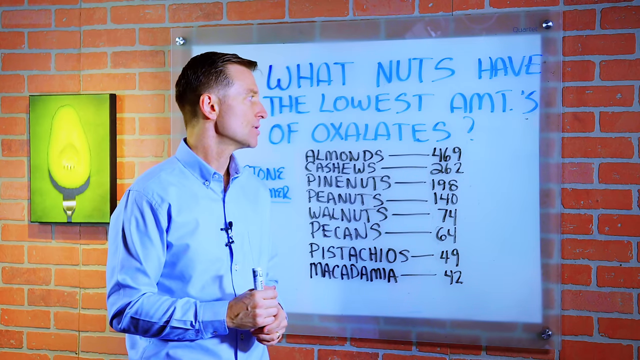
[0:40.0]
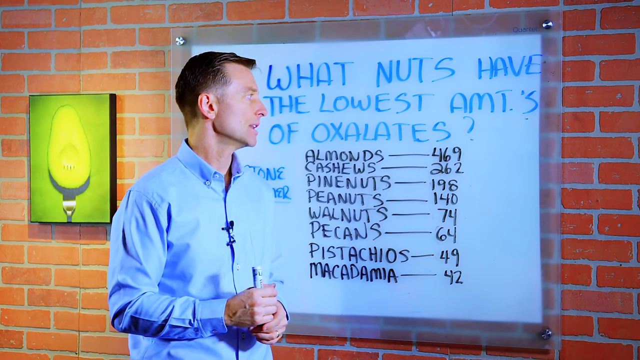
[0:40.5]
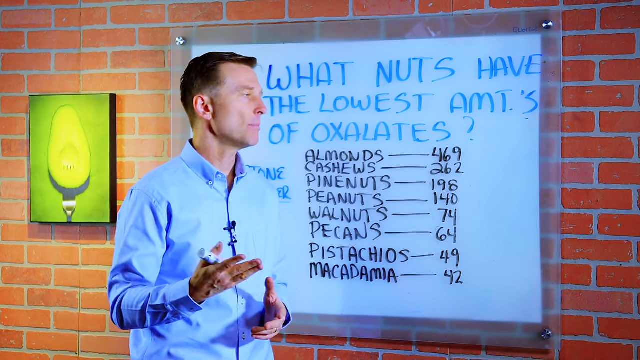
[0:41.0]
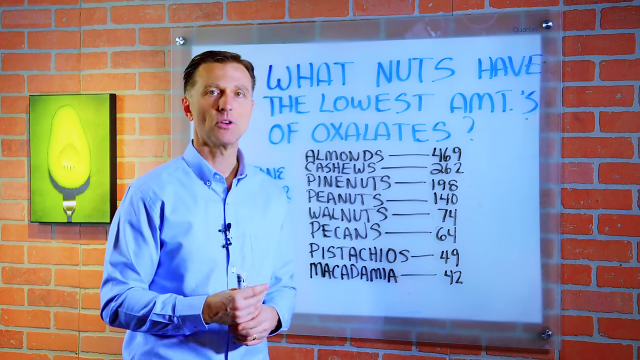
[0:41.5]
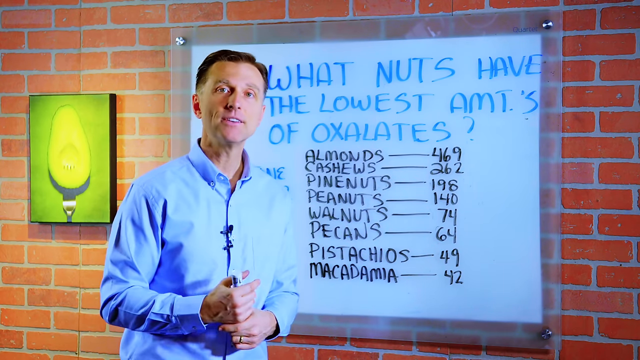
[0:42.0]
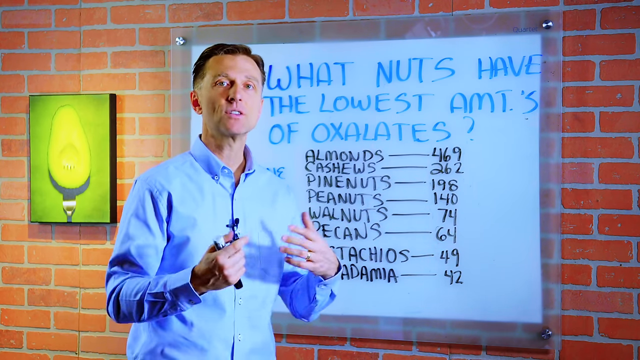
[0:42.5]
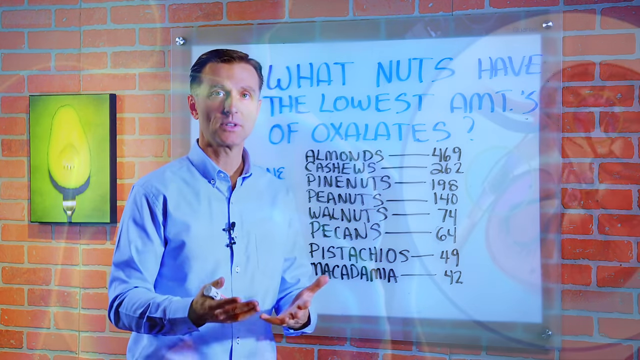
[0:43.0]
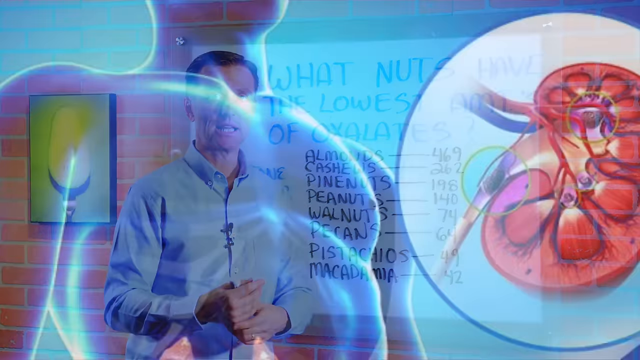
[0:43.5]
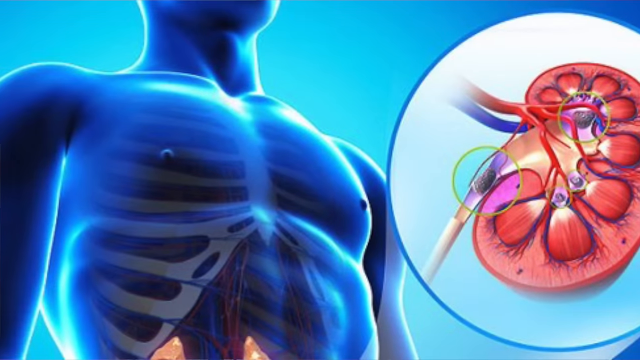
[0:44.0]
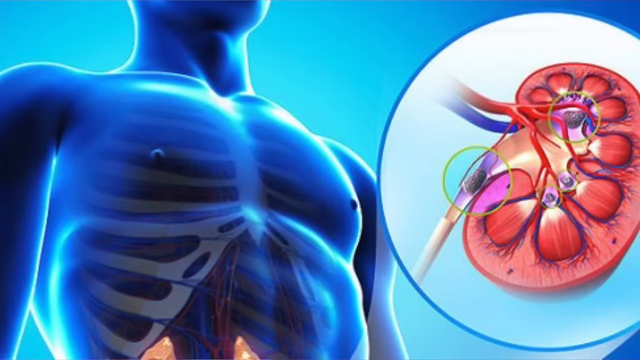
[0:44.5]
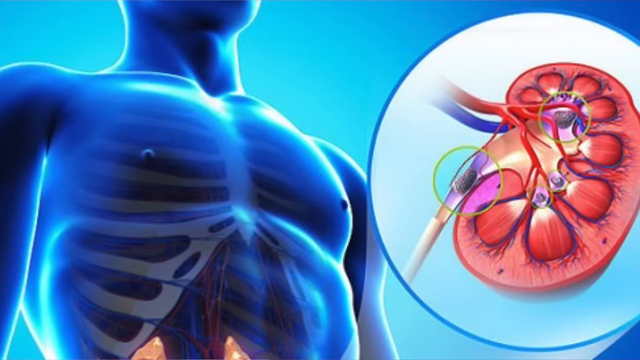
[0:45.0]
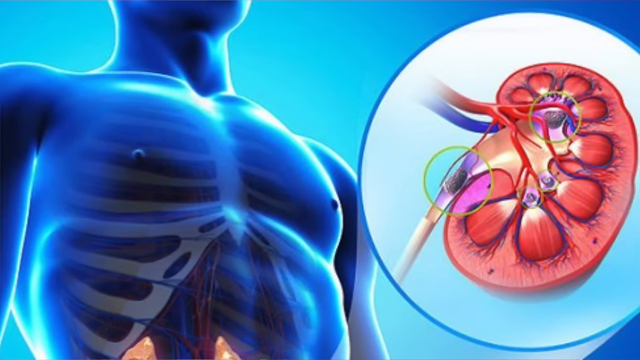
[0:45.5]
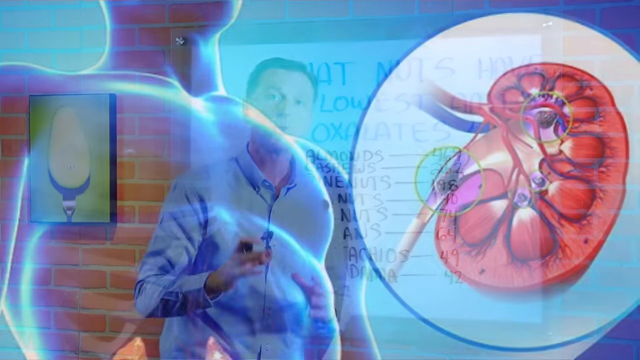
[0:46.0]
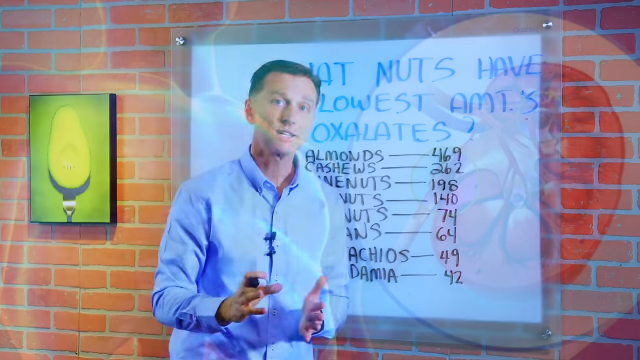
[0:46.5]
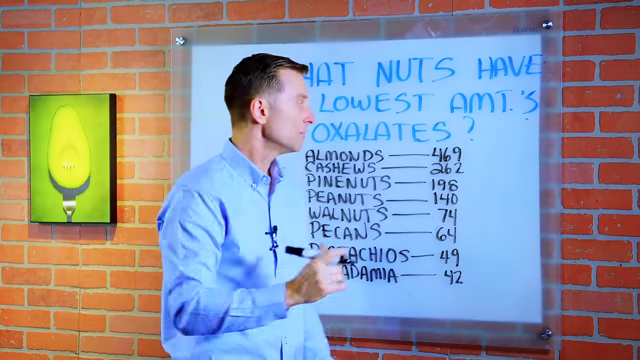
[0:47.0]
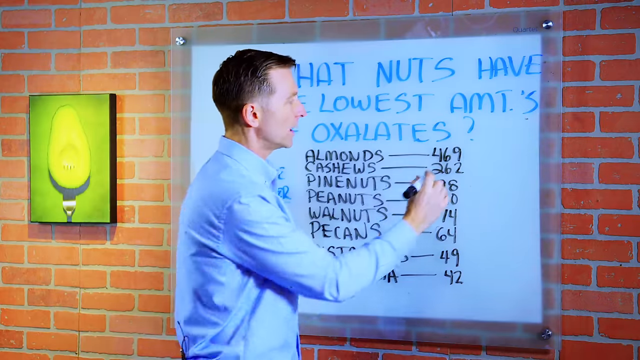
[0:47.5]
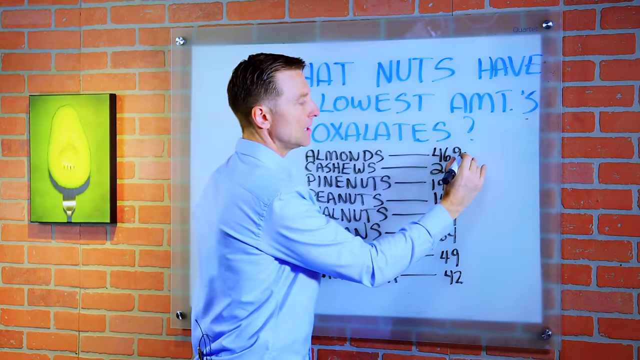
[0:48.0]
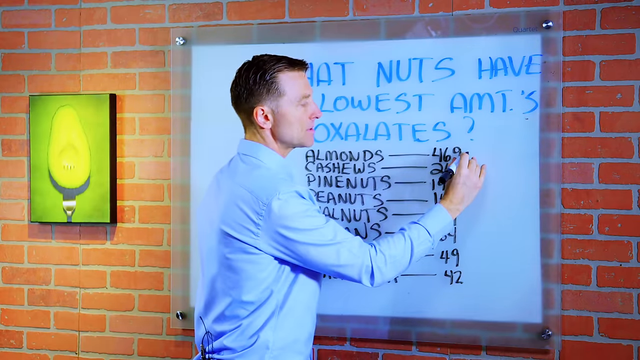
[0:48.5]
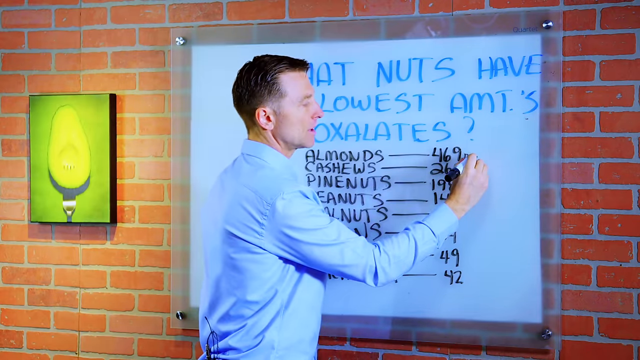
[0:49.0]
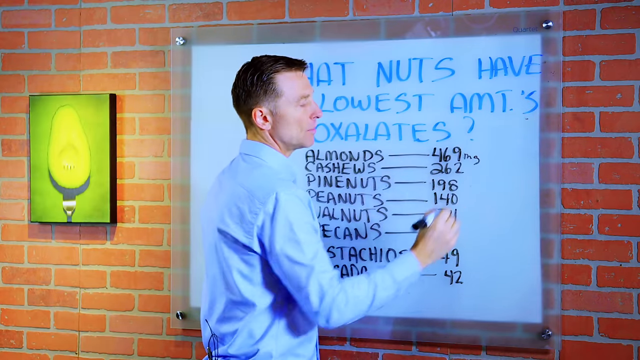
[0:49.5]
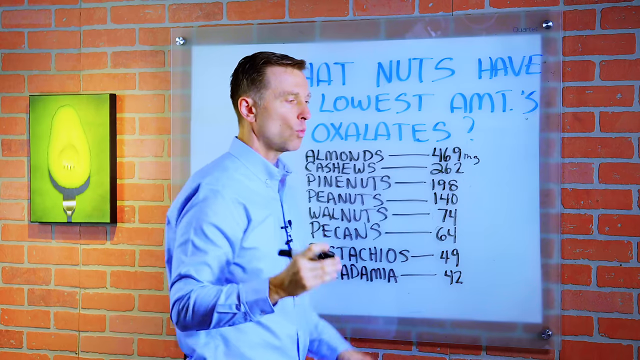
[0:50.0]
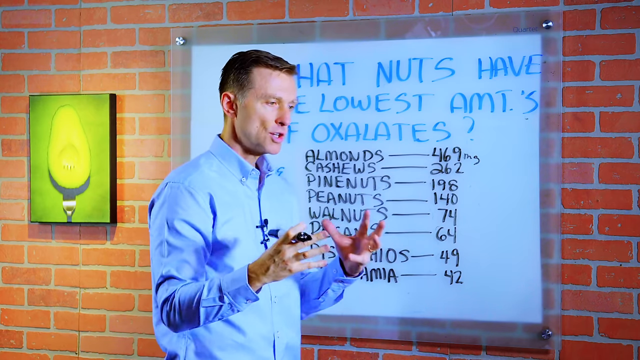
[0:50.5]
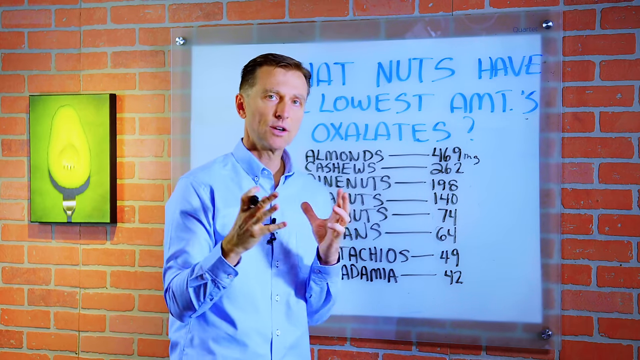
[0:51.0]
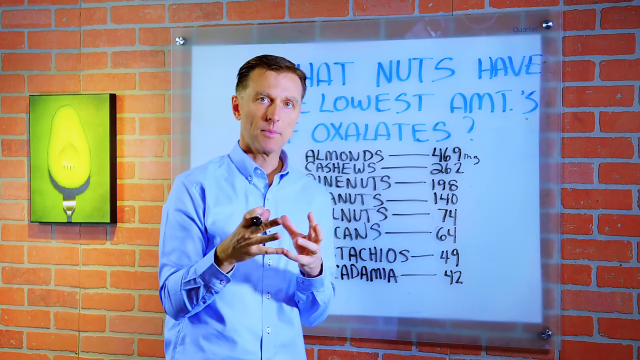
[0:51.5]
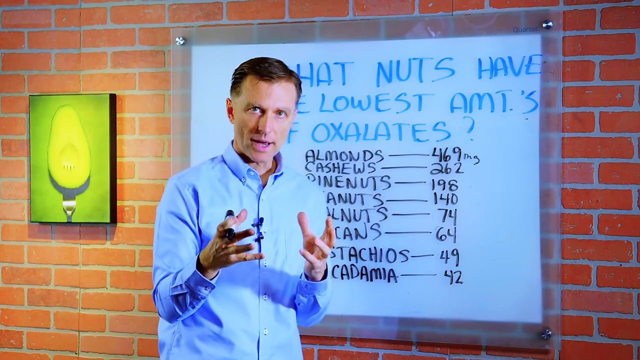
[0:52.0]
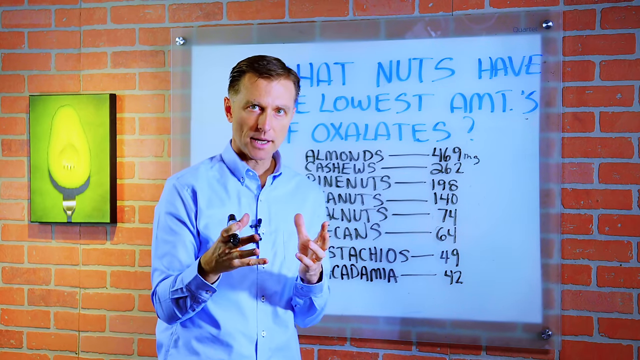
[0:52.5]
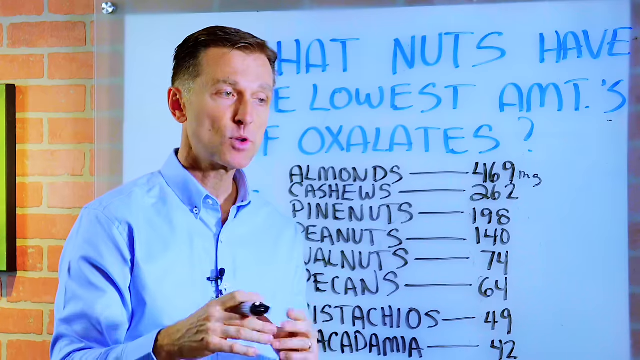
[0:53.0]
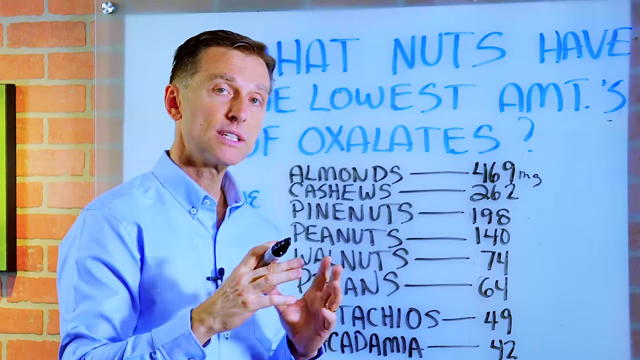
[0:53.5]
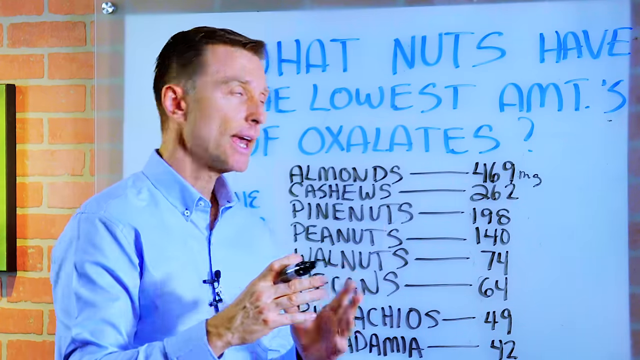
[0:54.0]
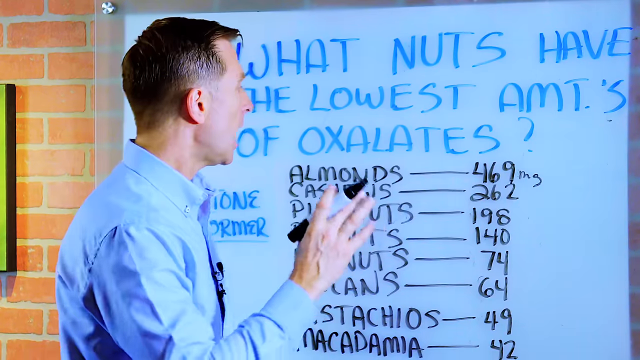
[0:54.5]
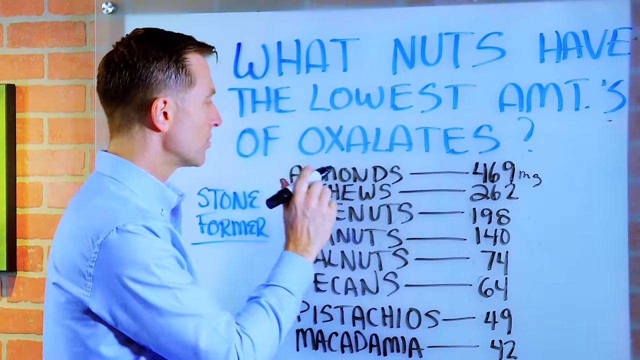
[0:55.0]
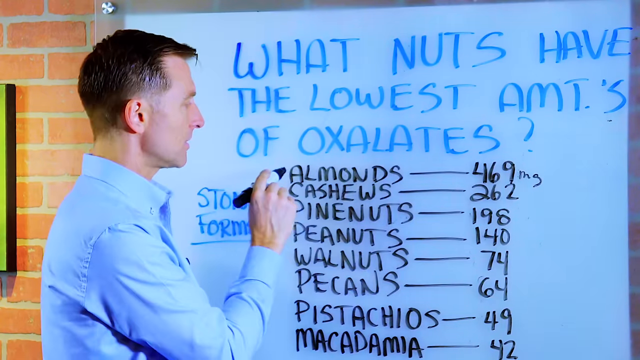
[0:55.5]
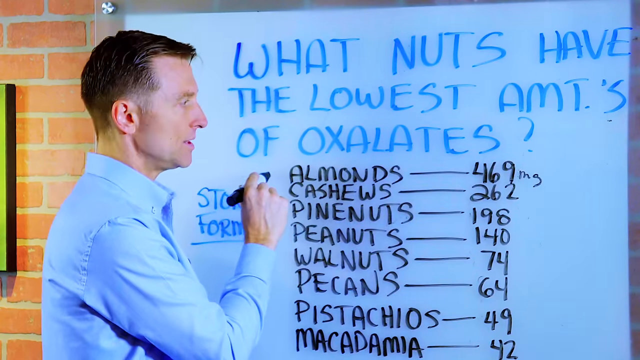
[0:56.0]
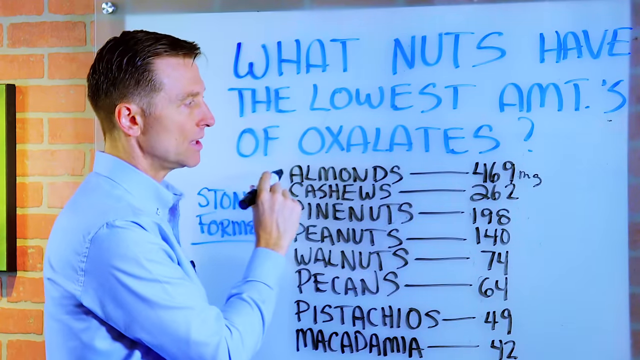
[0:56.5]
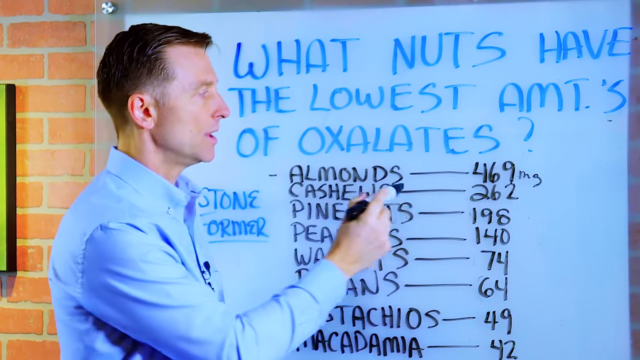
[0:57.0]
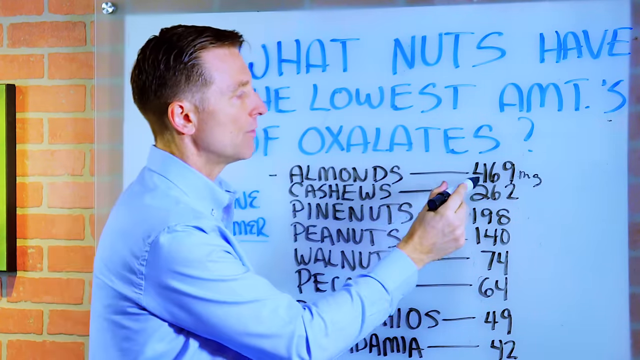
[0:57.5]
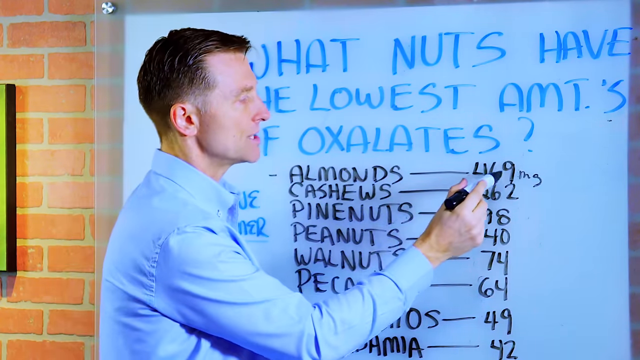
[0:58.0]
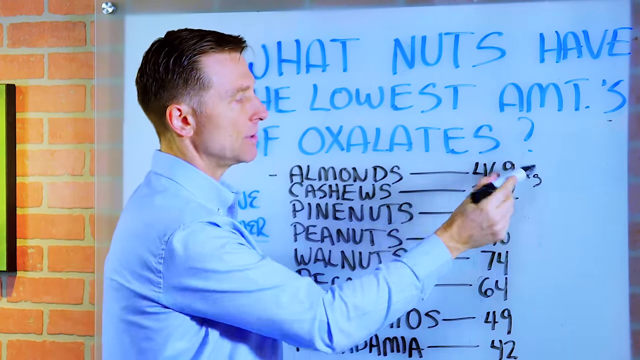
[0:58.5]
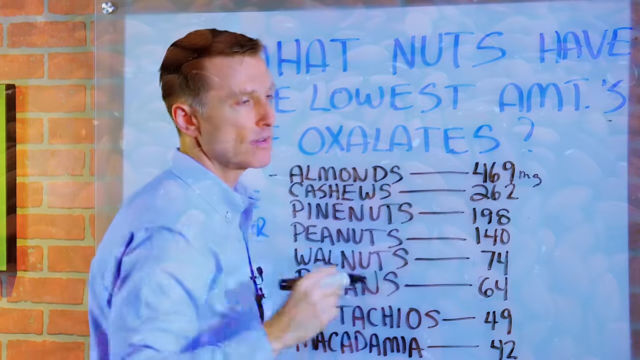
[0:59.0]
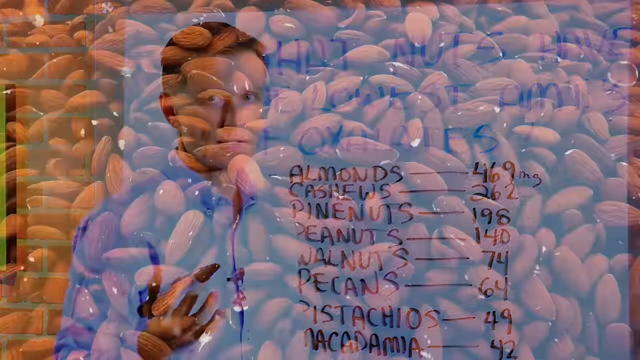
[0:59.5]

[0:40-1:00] The man, apparently a doctor or nutritionist, appears with the list of nuts with the lowest amounts of oxalates: almonds with 469, cashews with 262, pine nuts with 198, peanuts with 140, walnuts with 74, pecans with 64, pistachios with 49, and macadamia with 42. A heart muscle flashes on screen. The figures are shown to be in milligrams, with almonds at 469 milligrams.